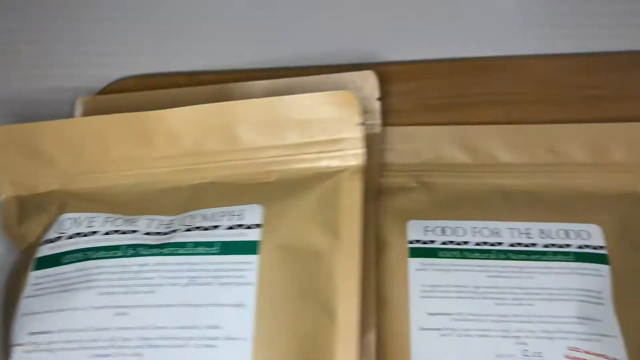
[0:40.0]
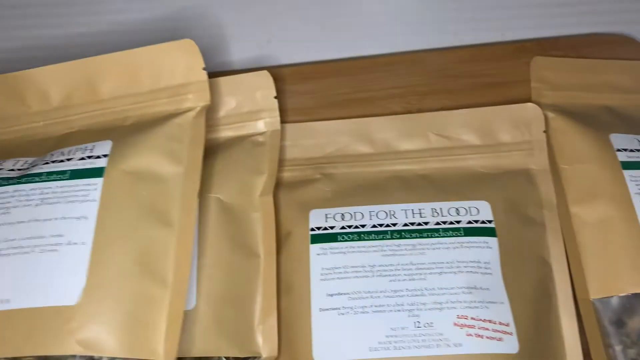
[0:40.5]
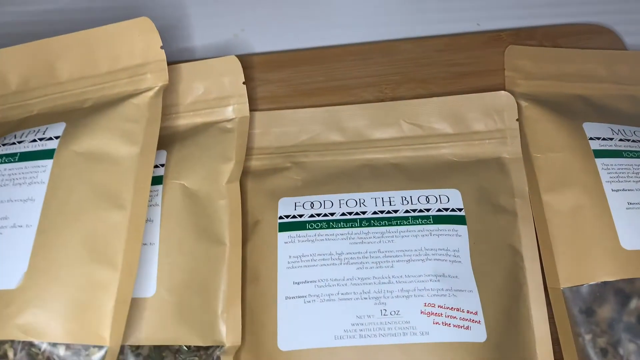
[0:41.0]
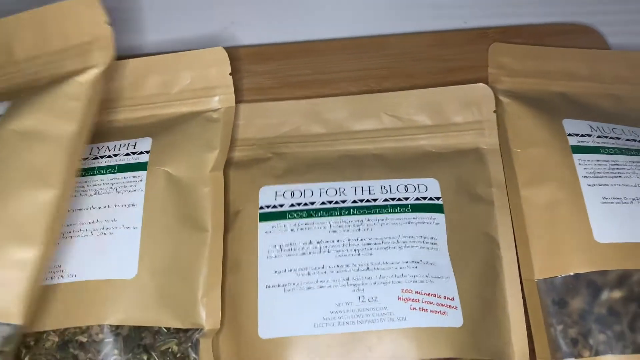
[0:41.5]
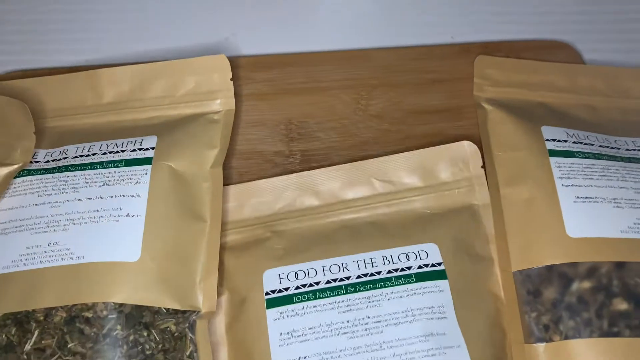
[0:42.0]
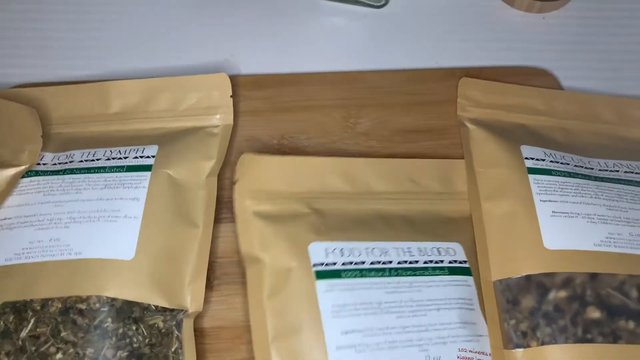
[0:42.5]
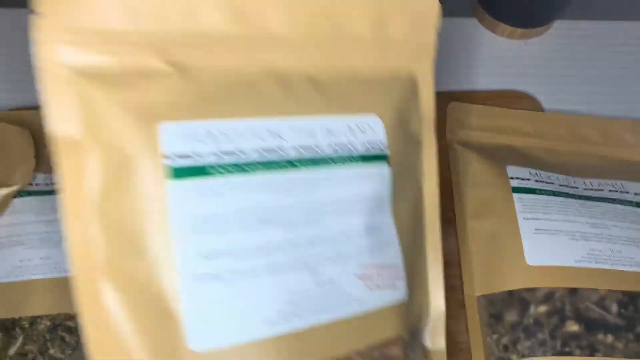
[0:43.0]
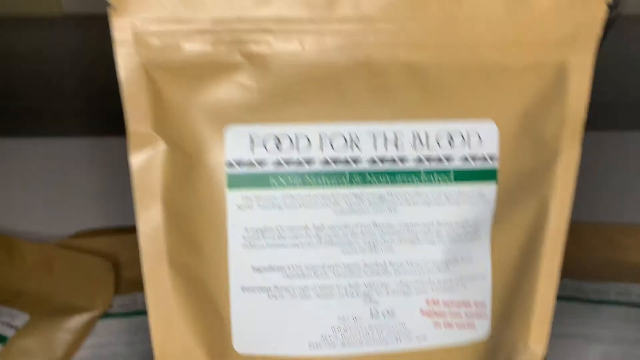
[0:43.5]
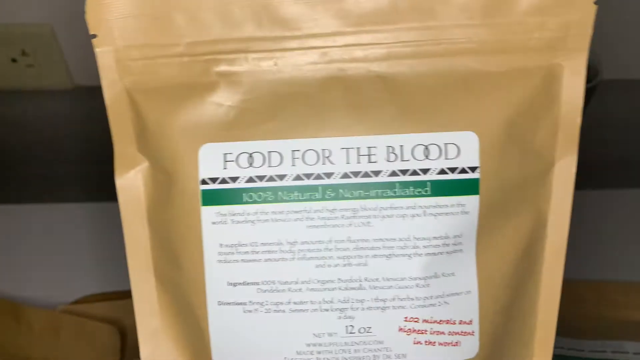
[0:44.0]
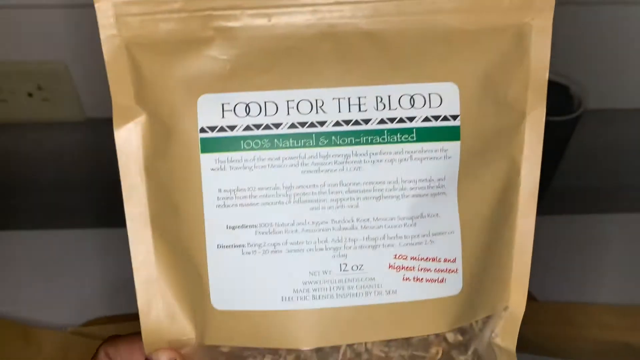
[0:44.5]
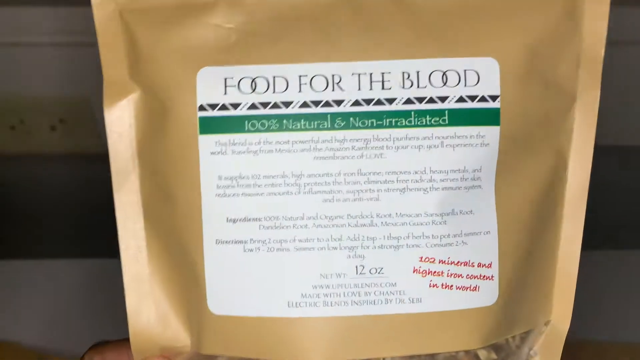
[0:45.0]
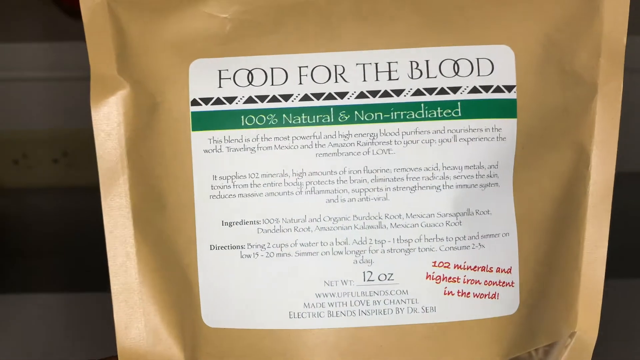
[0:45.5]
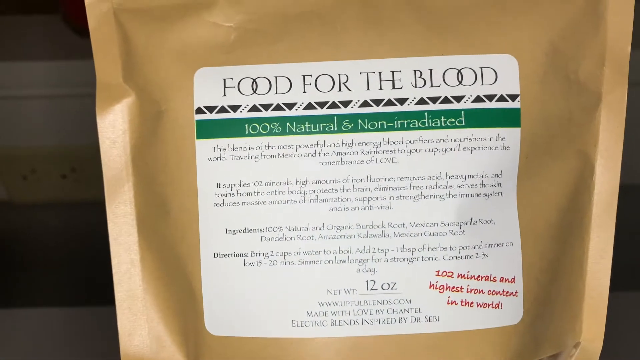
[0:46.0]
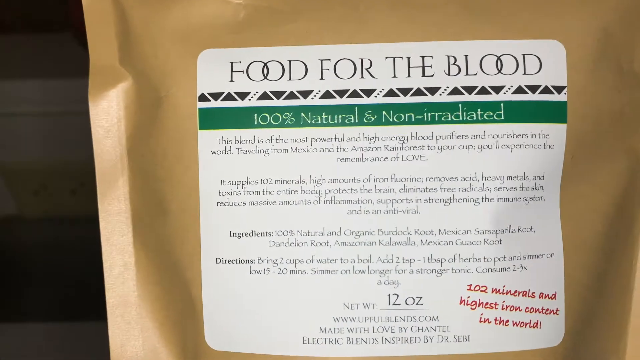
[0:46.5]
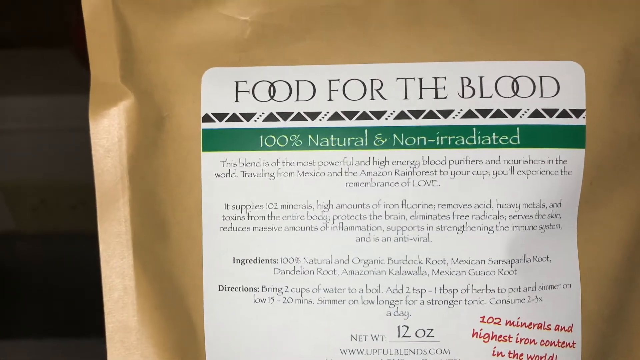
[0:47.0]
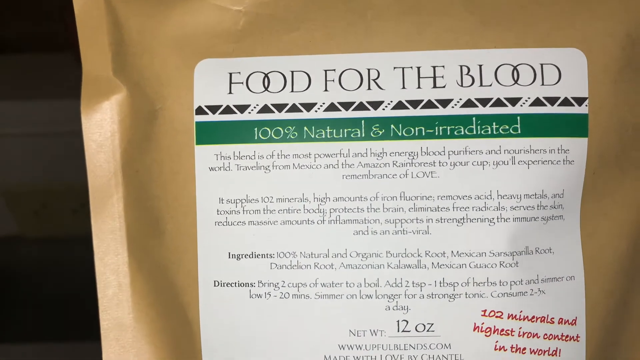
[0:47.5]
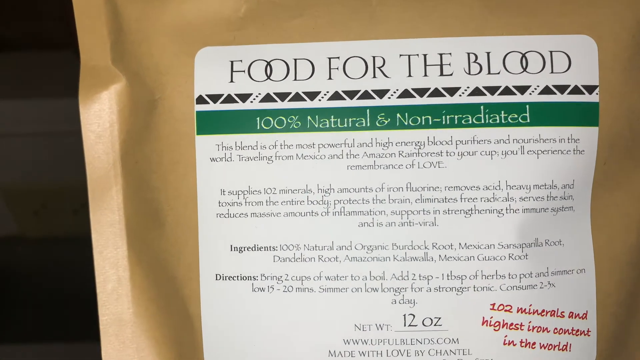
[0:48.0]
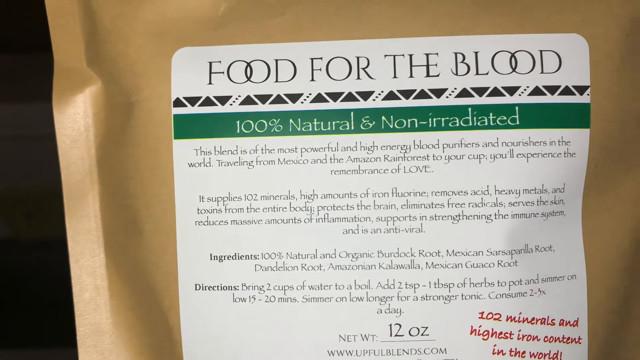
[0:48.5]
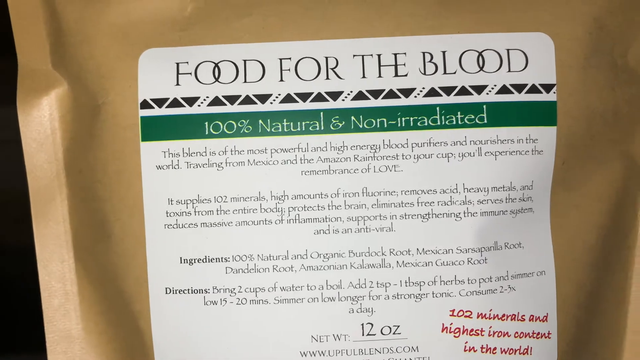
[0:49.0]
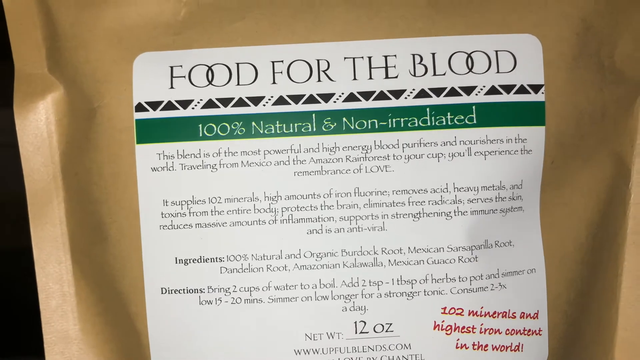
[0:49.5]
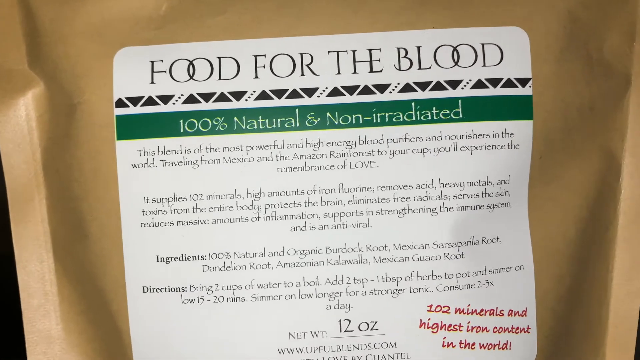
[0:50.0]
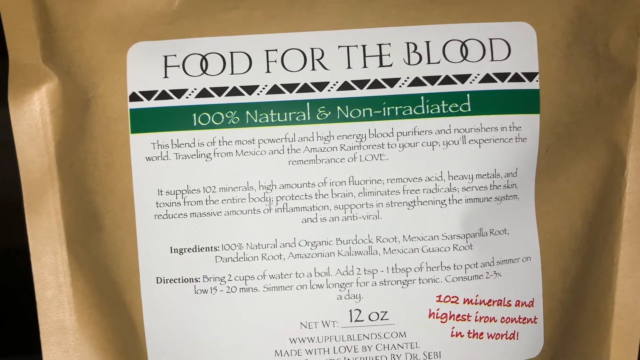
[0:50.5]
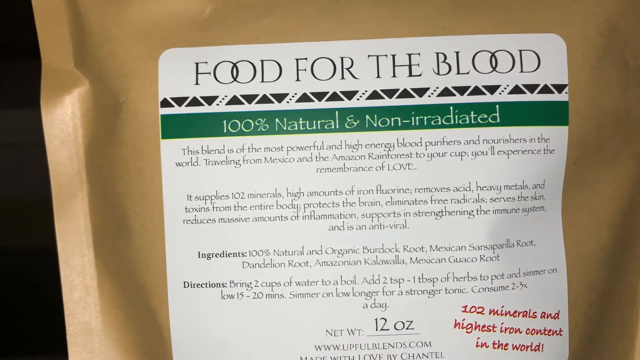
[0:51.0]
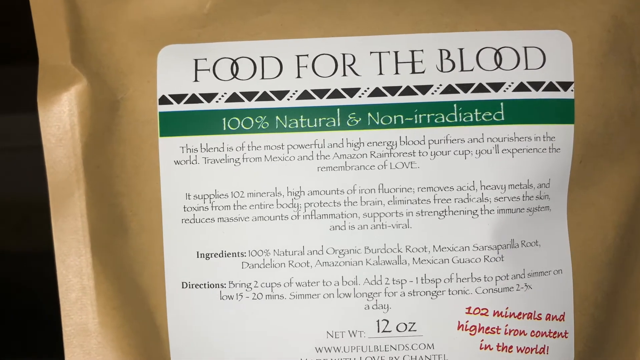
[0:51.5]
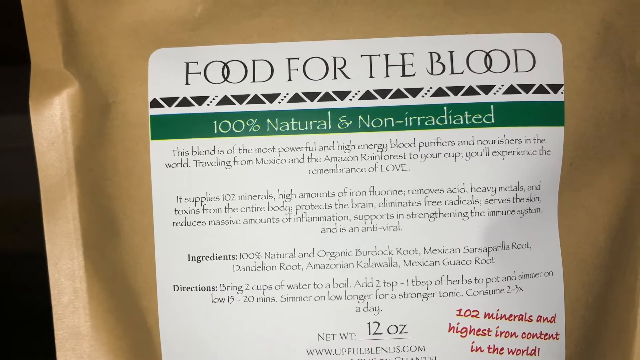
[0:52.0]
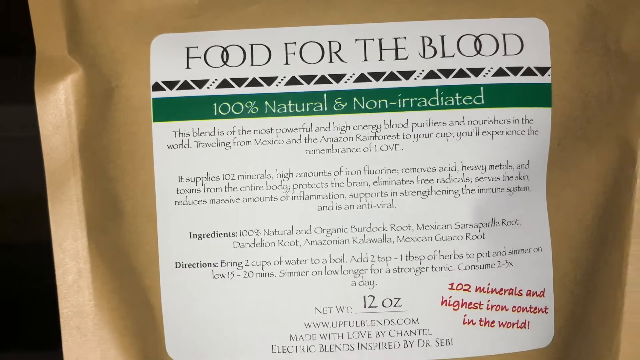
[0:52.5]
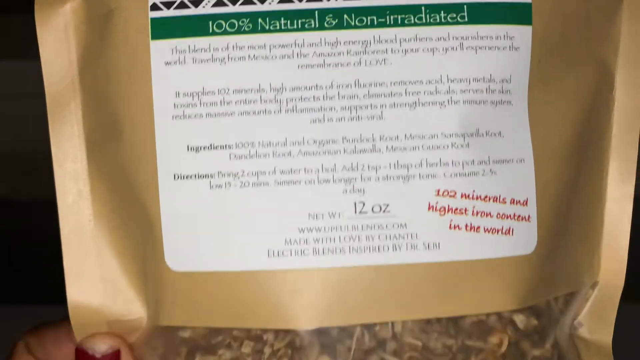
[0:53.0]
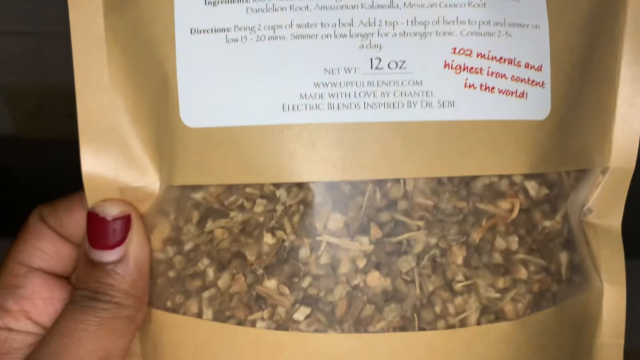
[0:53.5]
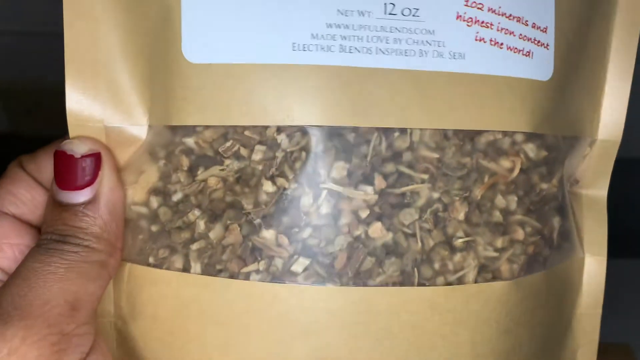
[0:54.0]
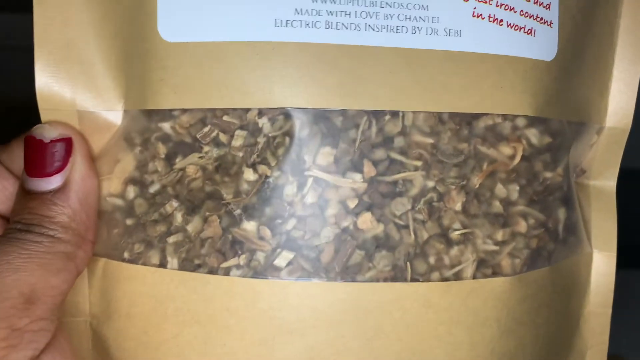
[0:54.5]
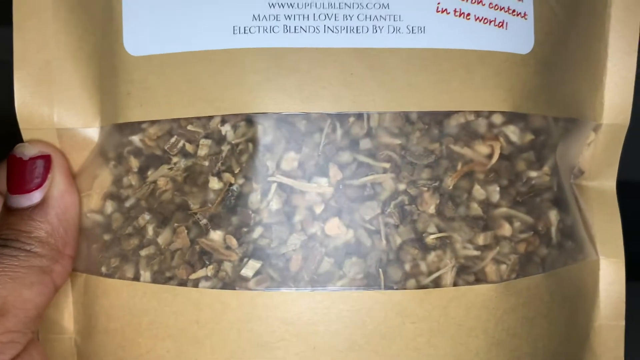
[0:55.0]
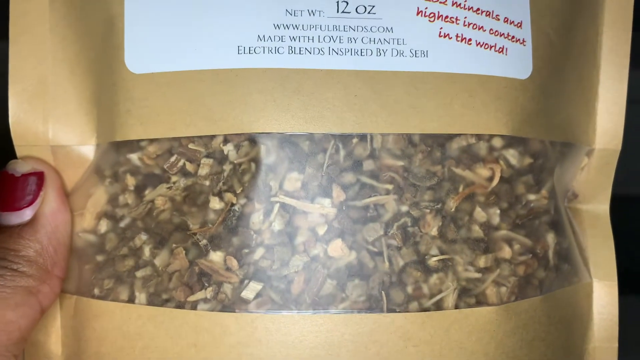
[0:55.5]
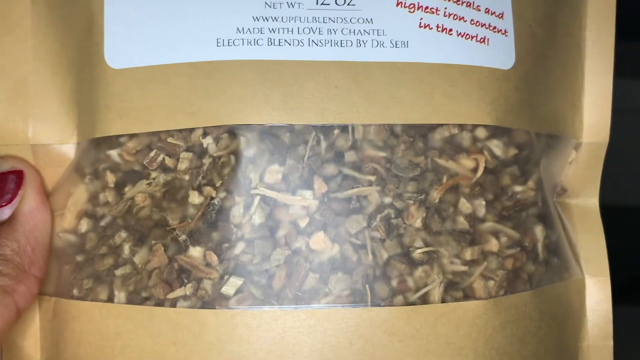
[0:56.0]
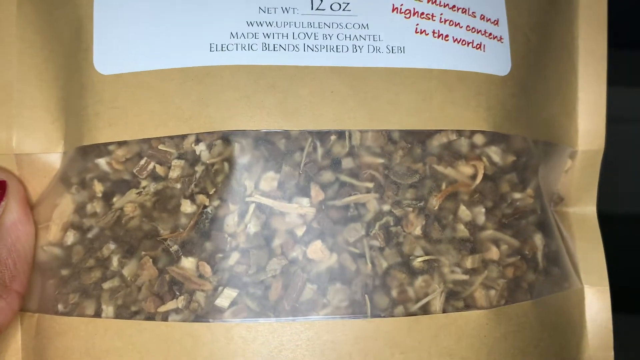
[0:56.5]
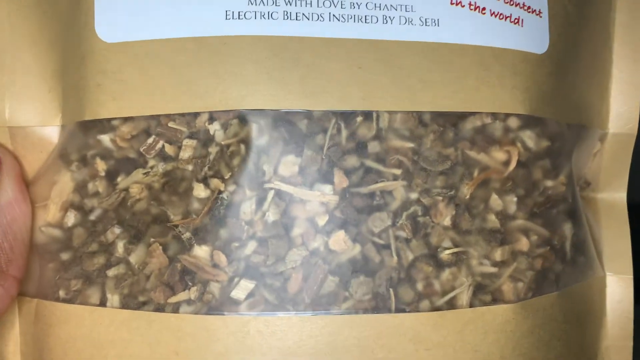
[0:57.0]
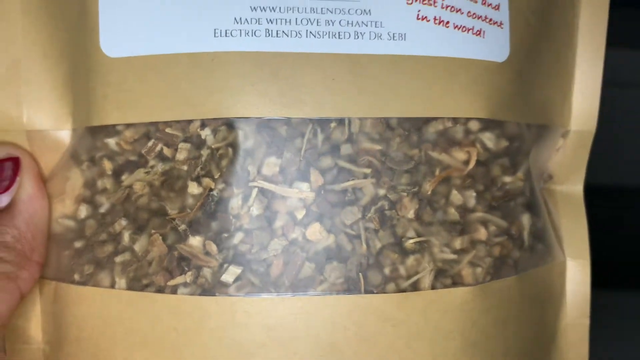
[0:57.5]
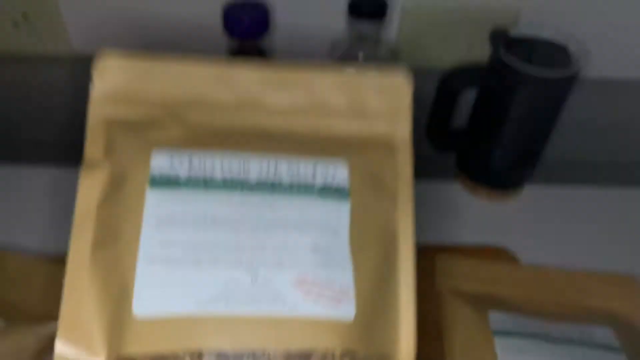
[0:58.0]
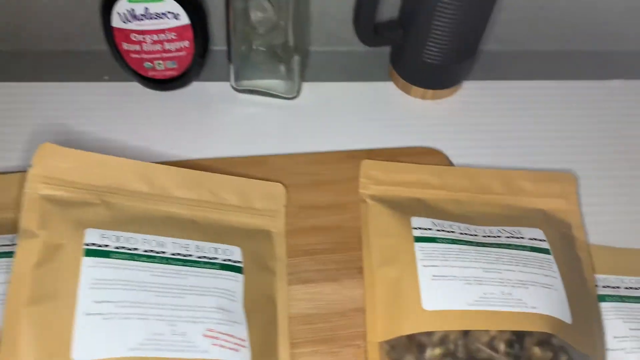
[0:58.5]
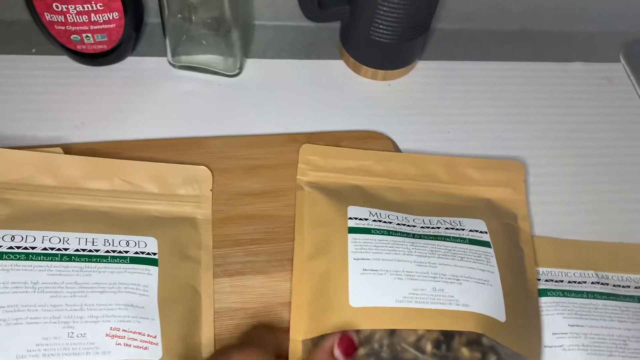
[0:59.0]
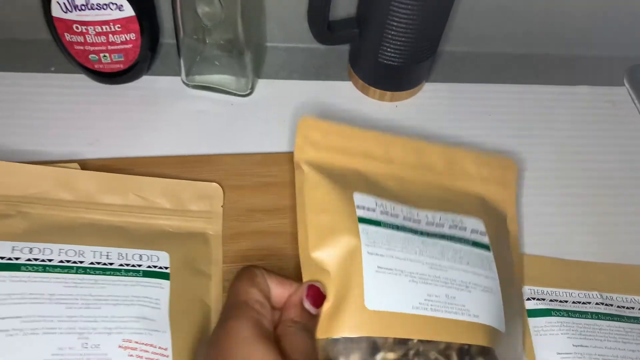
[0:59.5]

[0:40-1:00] Packets of what seem to be herbs are visible. One packet reads "food for the blood" and "100% natural and non-irradiated," along with instructions for use and a list of contents. A corner printed in red reads "102 minerals and highest iron content in the world," and the weight is 12 oz. It is a khaki paper bag with a white label, holding dried herbs apparently for cleansing the blood. A woman holds the package and shows it to the screen. Four bags are visible; they are packaged the same, but the contents of each seem to be different. Nothing changes except when the woman puts the bag down and picks another one up. Not all of the writing on it can be read, but it relates to the herbs inside the package.